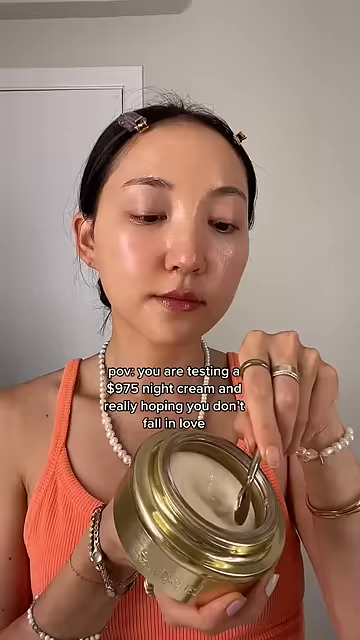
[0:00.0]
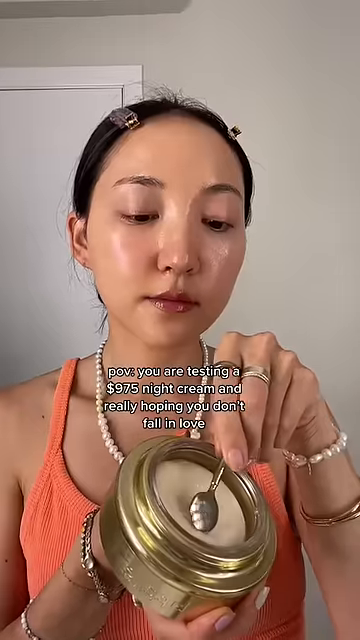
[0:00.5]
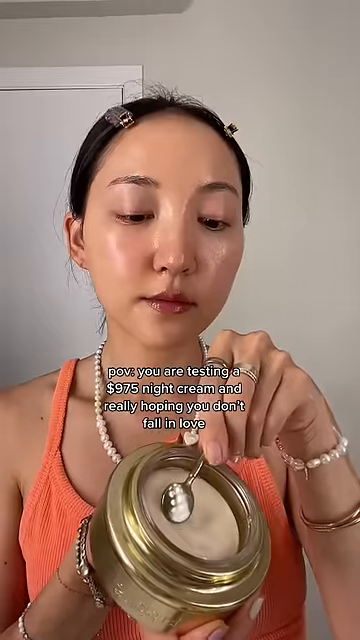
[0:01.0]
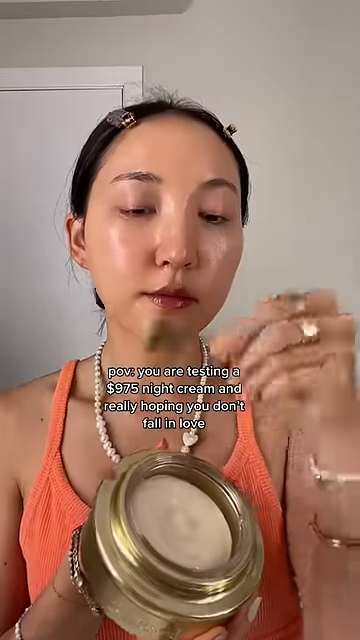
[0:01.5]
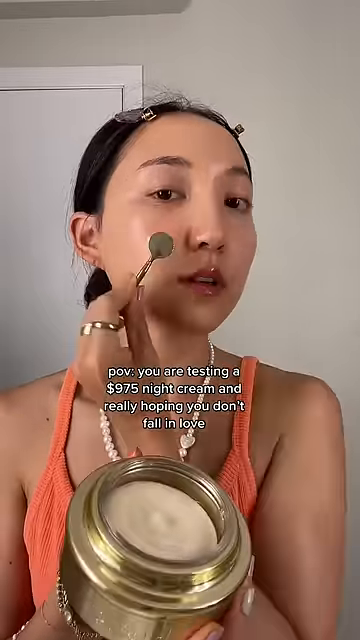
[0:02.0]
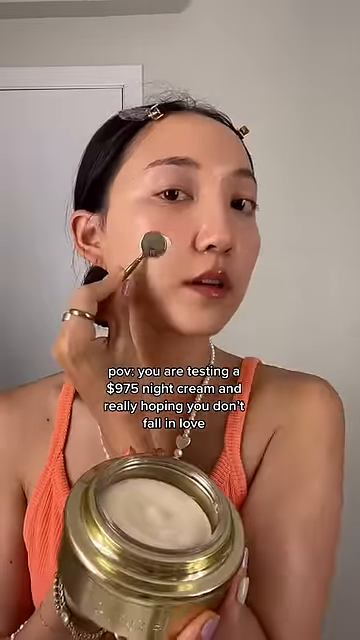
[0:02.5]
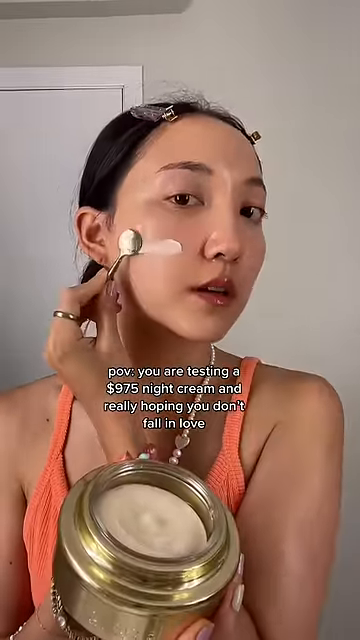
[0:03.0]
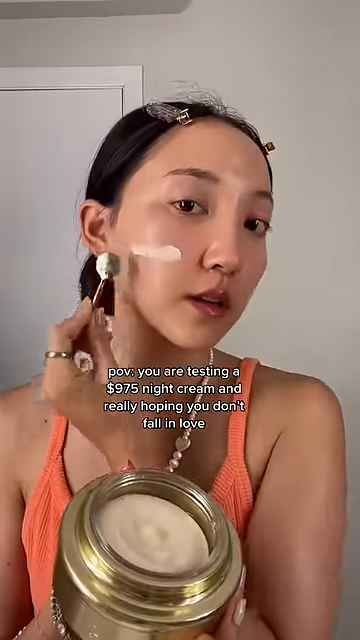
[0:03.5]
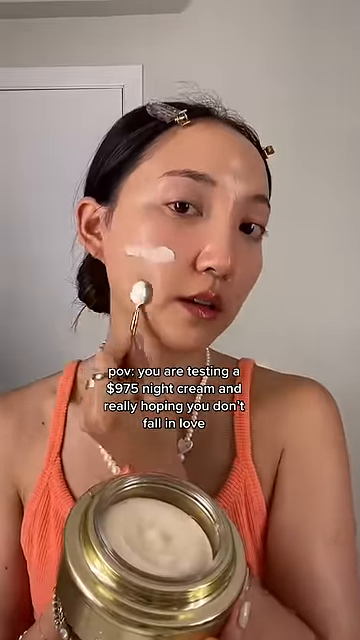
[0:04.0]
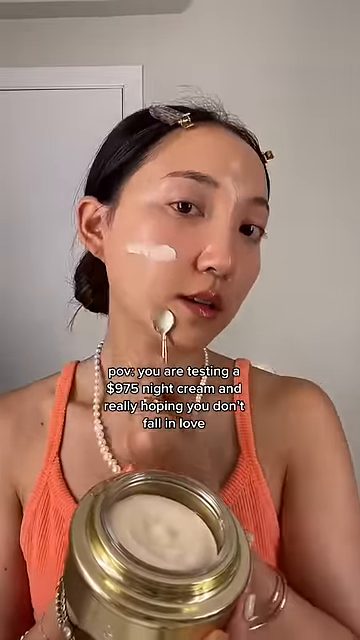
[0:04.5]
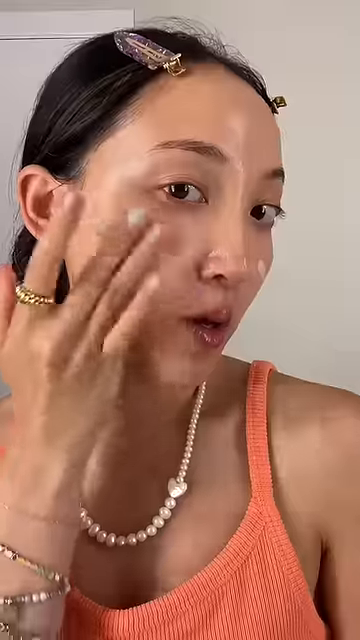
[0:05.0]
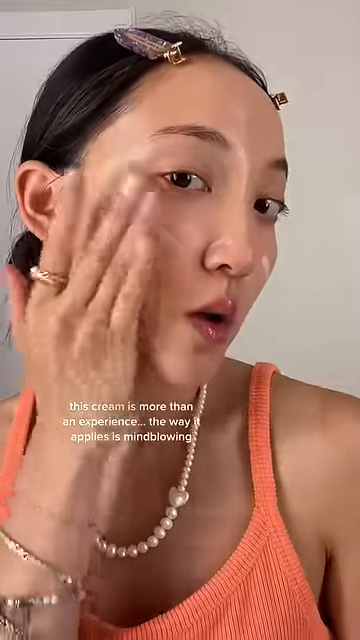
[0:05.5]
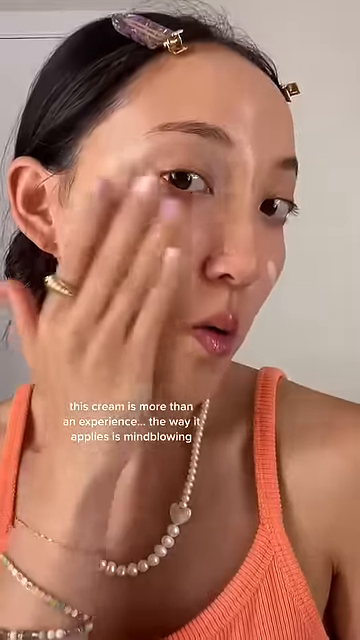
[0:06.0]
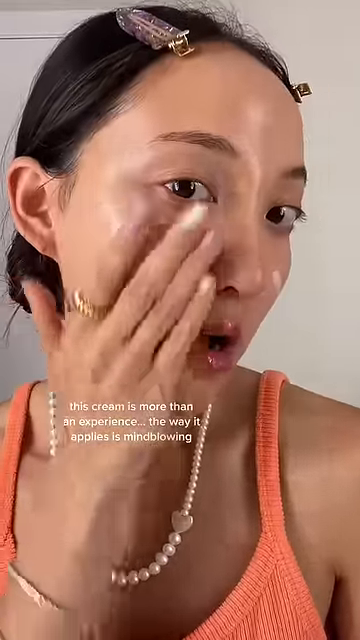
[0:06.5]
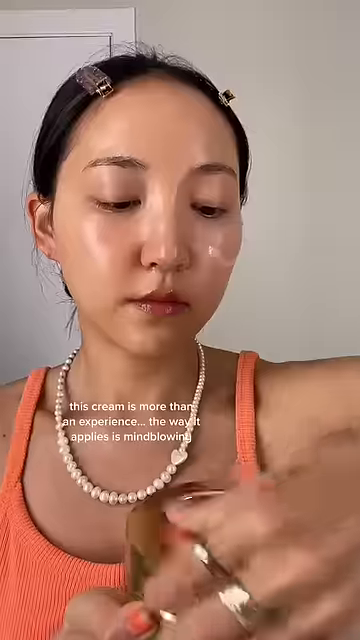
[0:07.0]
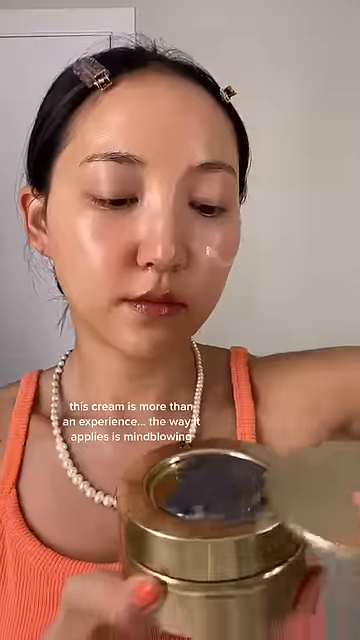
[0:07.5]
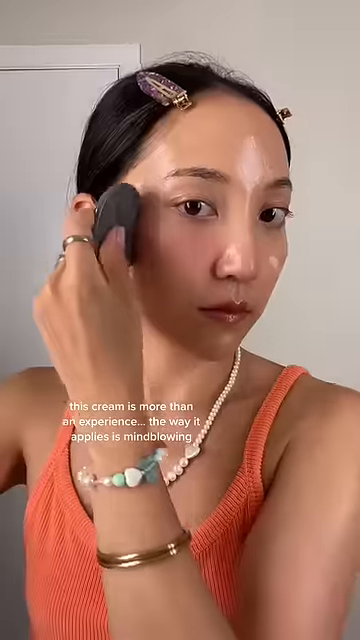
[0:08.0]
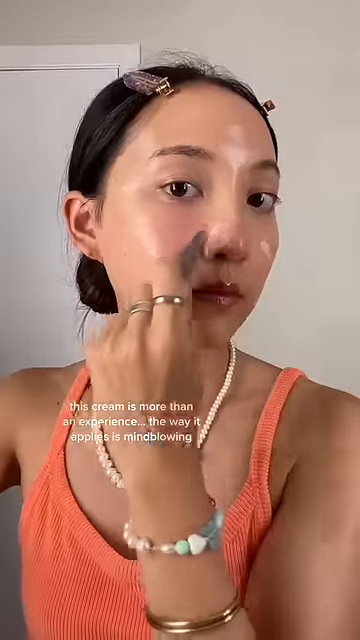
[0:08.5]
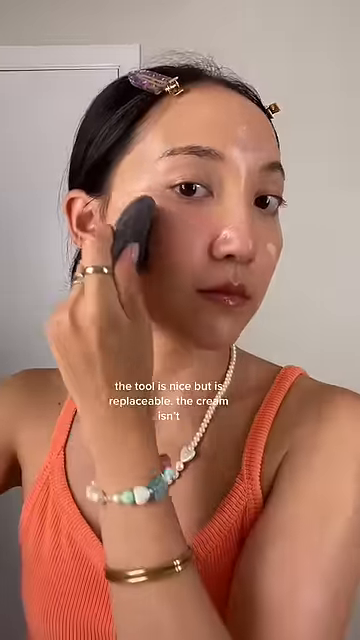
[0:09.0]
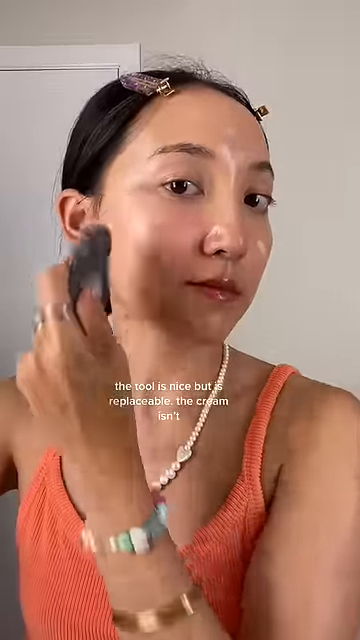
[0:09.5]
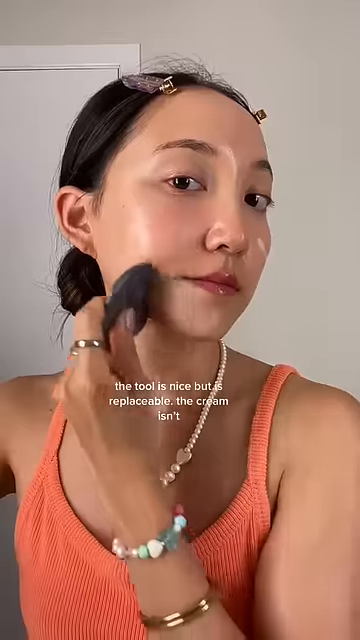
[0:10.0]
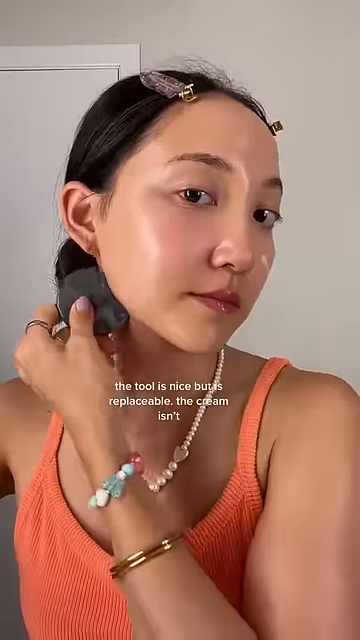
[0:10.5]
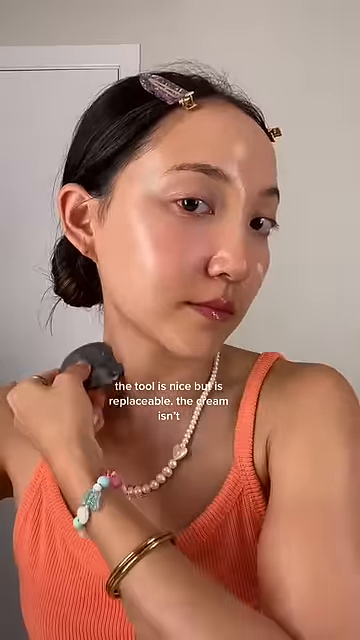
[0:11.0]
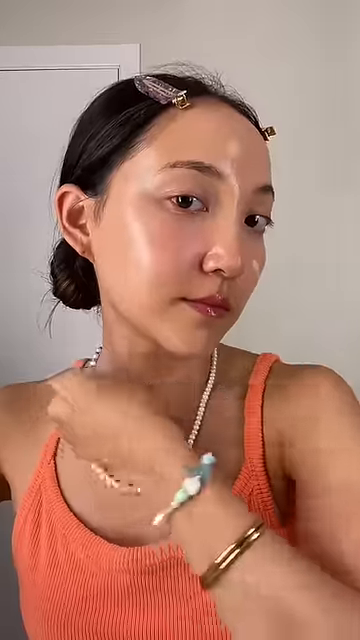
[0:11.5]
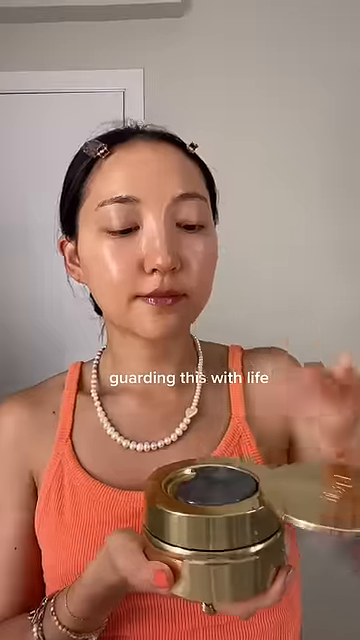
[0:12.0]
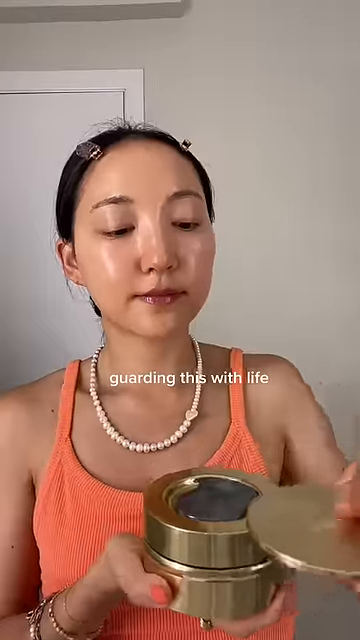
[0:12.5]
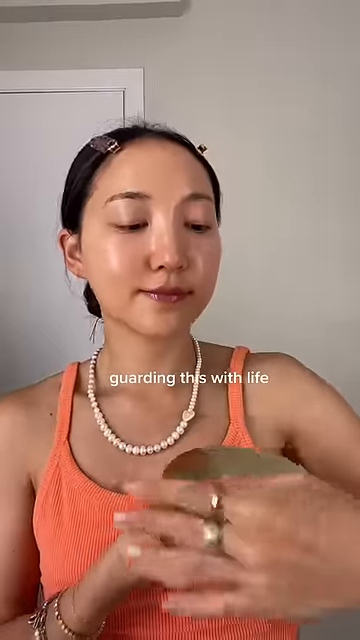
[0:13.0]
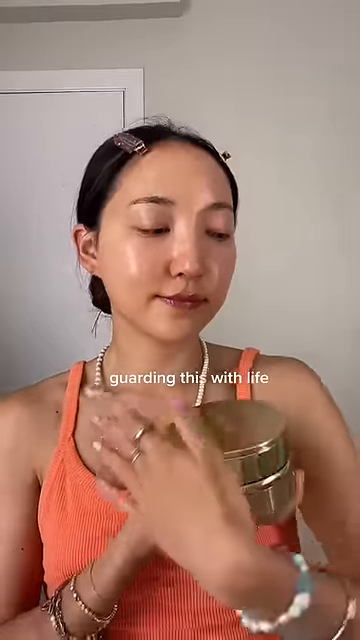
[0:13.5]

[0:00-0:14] The video is titled POV you're testing a $975 cream, and throughout the video there is text that says "you are testing a $975 night cream and really hope you don't fall in love." A woman looks directly at the camera. Her hair is slicked back with some clips in it and is in a low bun. She wears a pearl necklace and an orange-colored tank top, along with a lot of jewelry, including some rings and some bracelets. Throughout the video she applies an eye cream. The eye cream is in a very large gold jar, and the product inside appears to be a cream-colored moisturizer or eye cream. Looking directly at the camera, she uses a silver or gold applicator to apply it directly onto her face. After that, she uses her fingers to rub in the eye cream, and then she runs a guasha over her face. The video ends with her closing the lid of the eye cream.